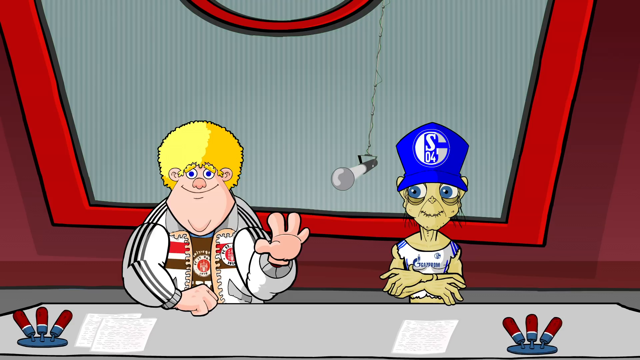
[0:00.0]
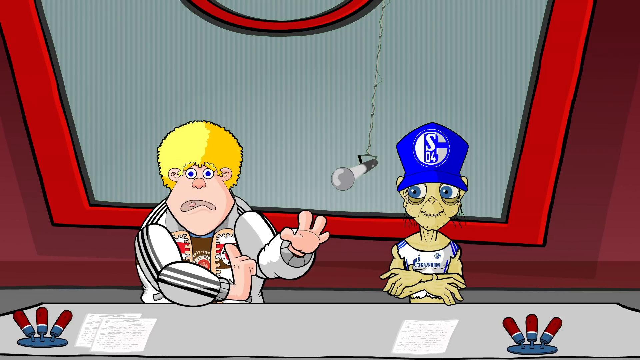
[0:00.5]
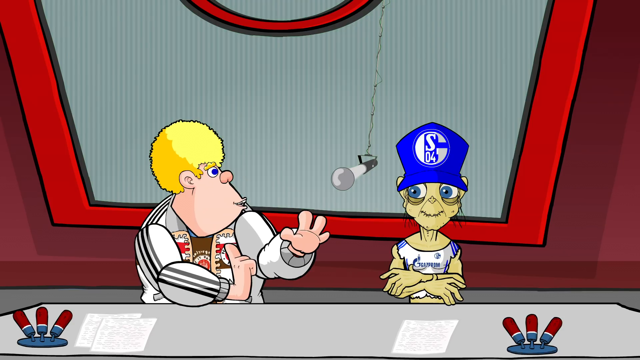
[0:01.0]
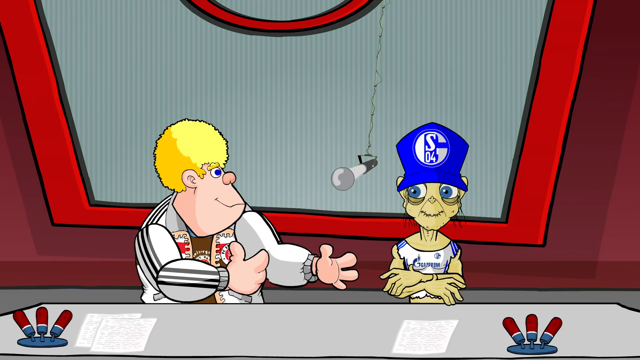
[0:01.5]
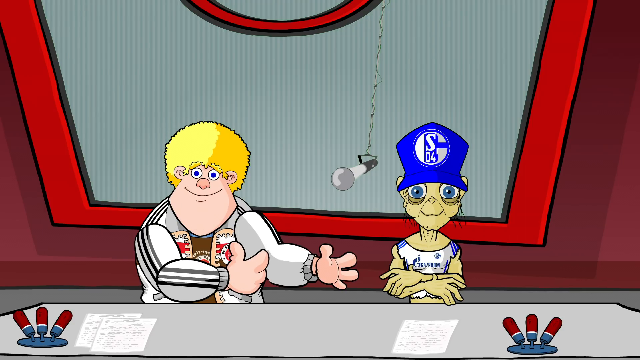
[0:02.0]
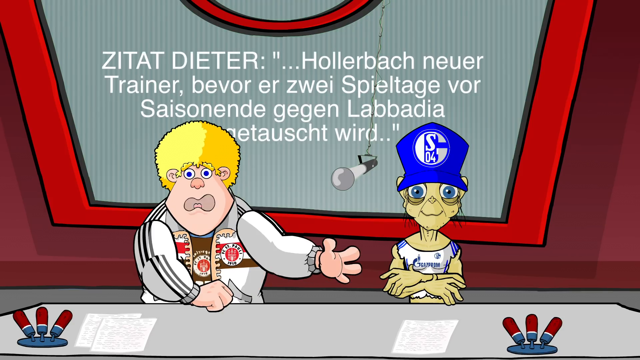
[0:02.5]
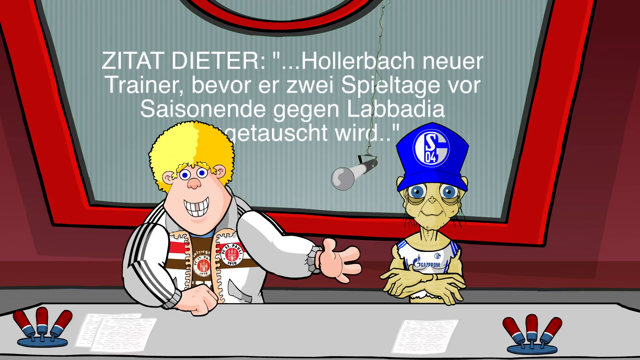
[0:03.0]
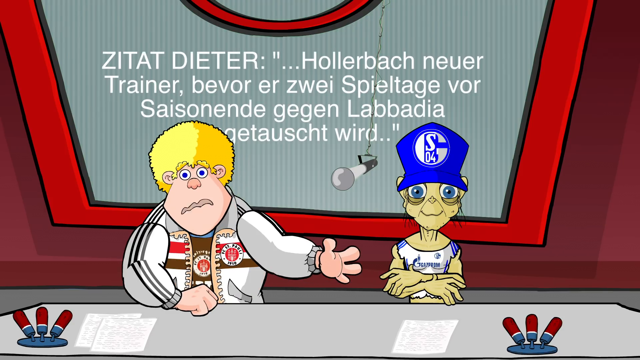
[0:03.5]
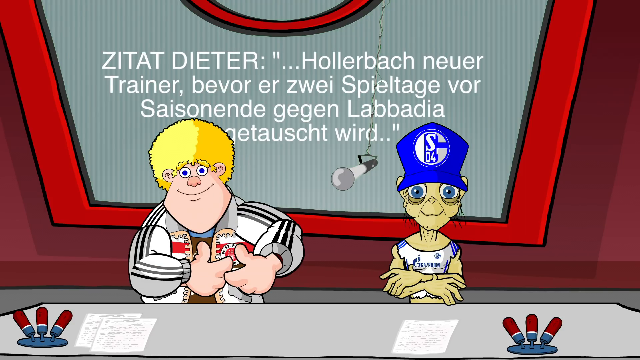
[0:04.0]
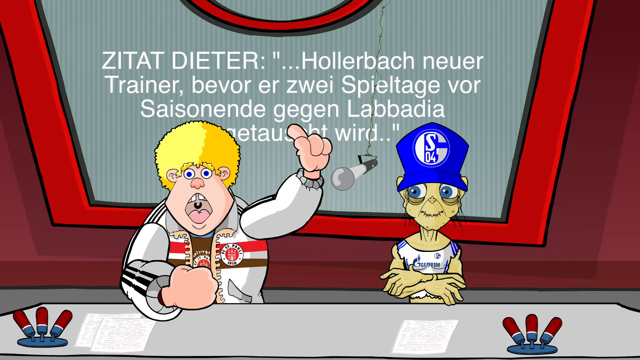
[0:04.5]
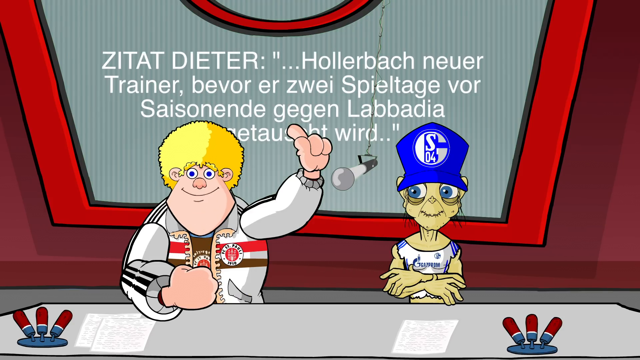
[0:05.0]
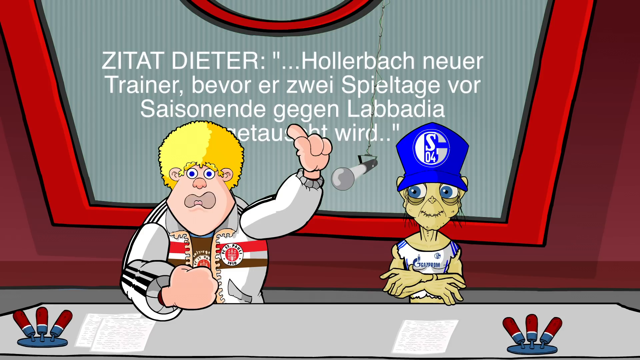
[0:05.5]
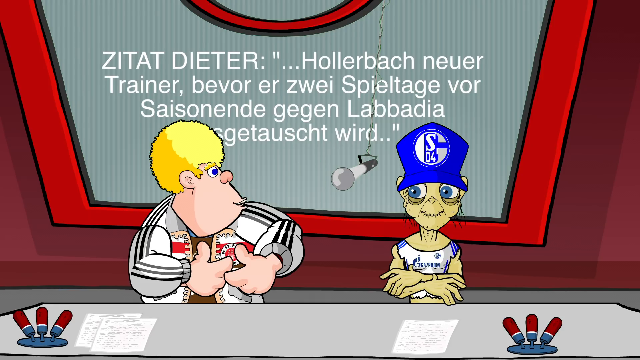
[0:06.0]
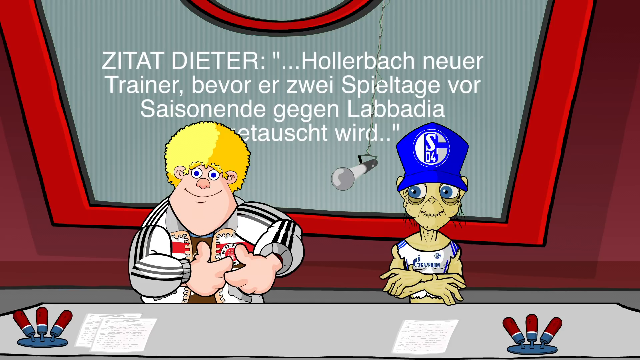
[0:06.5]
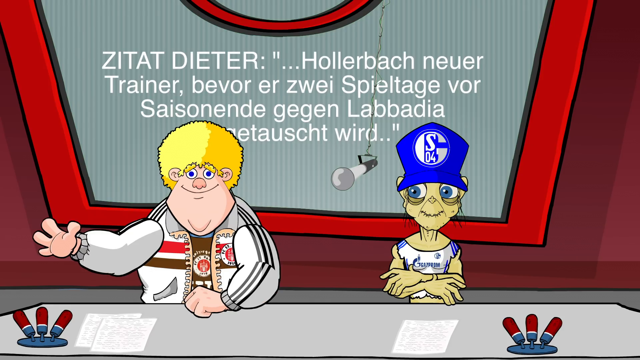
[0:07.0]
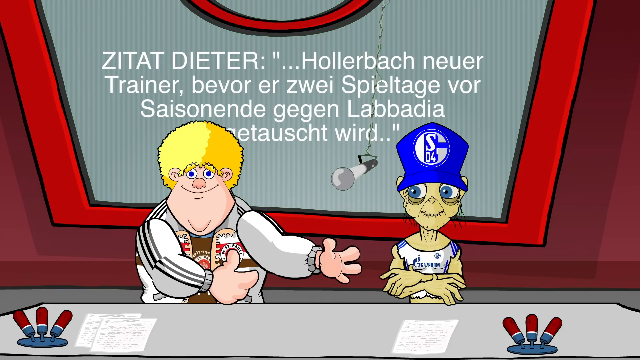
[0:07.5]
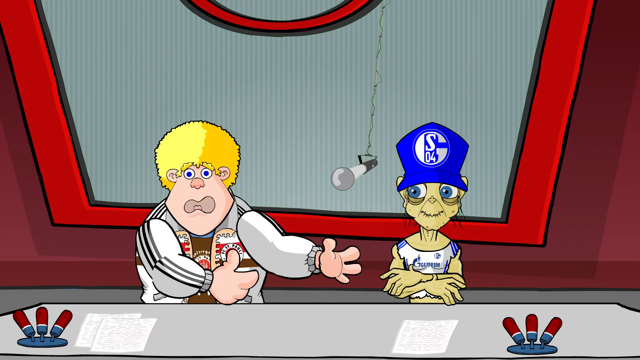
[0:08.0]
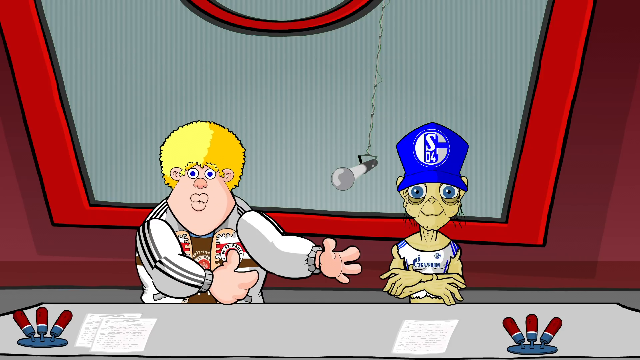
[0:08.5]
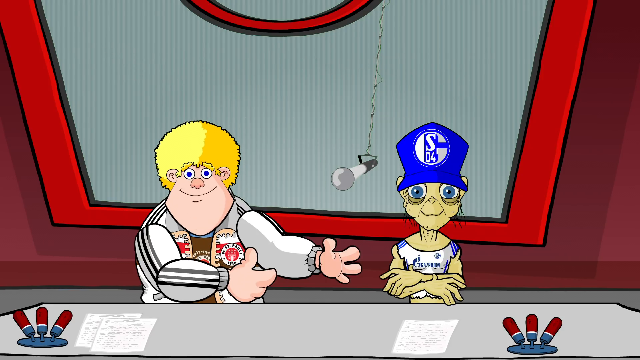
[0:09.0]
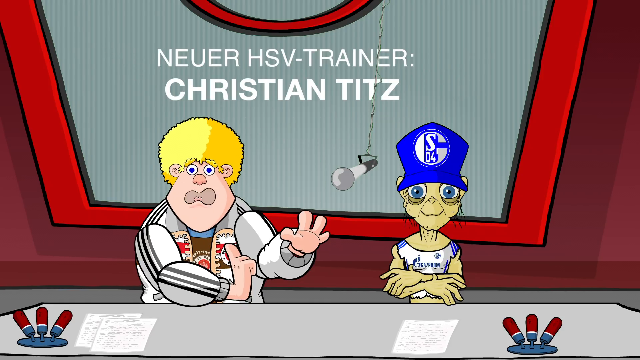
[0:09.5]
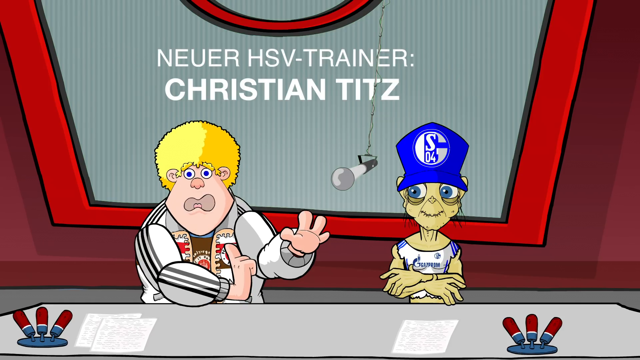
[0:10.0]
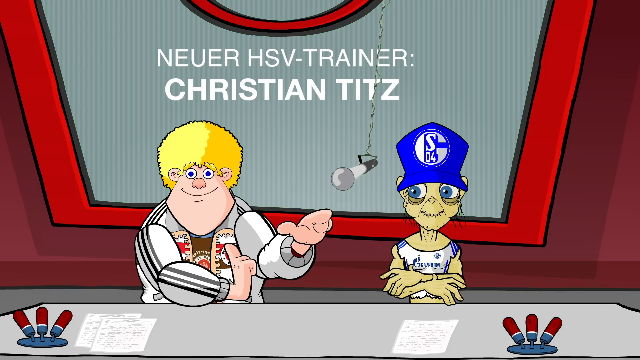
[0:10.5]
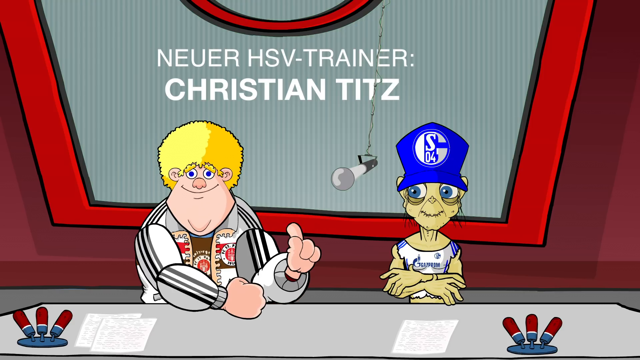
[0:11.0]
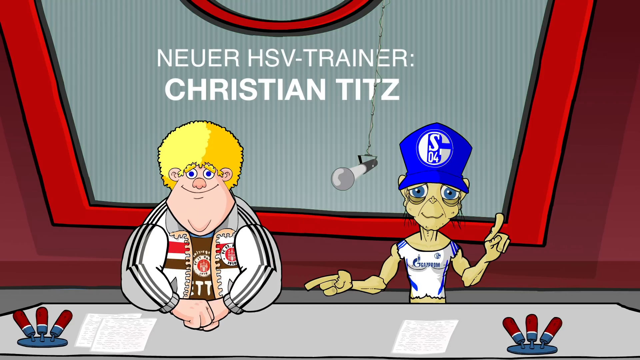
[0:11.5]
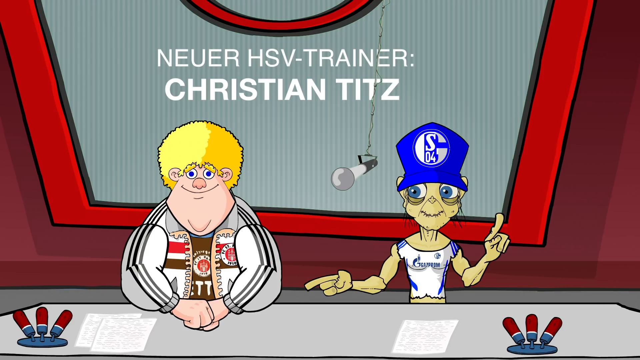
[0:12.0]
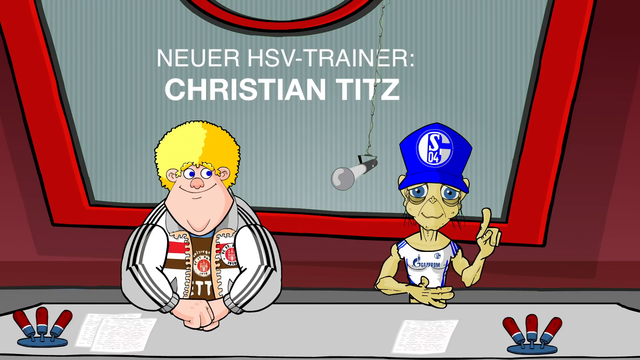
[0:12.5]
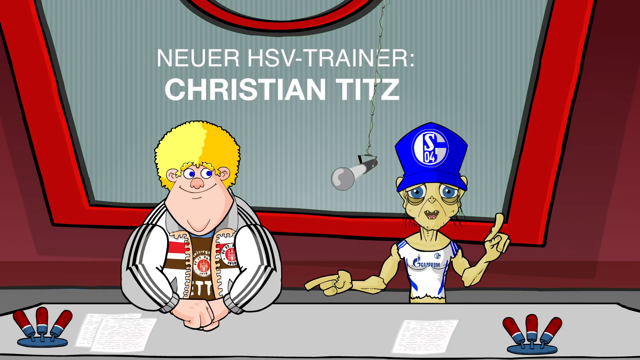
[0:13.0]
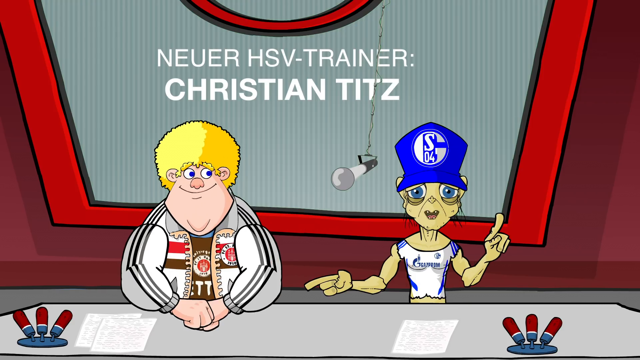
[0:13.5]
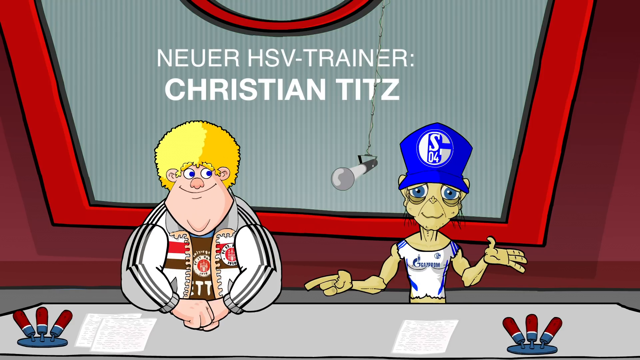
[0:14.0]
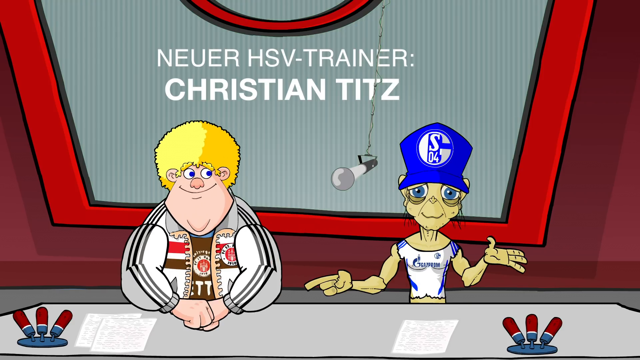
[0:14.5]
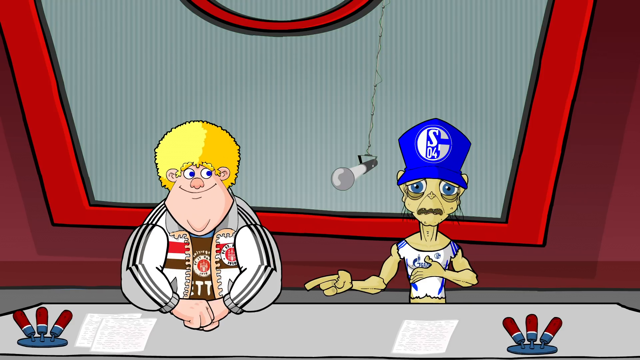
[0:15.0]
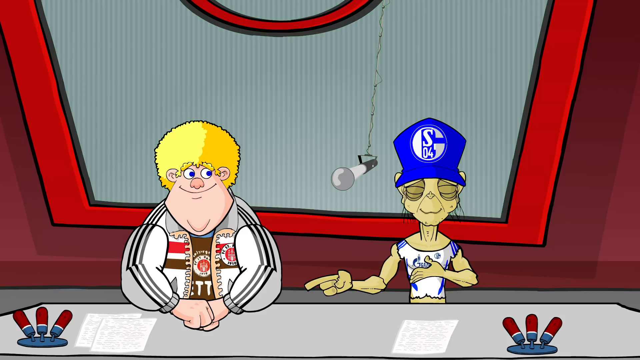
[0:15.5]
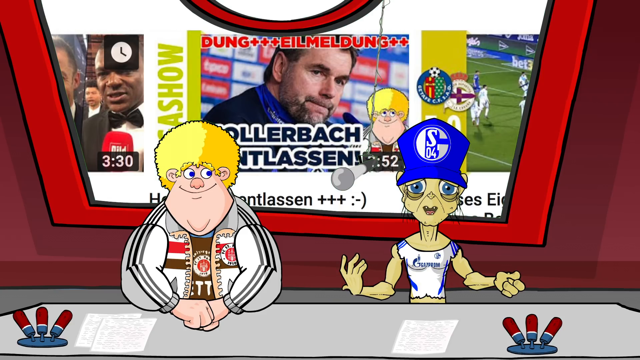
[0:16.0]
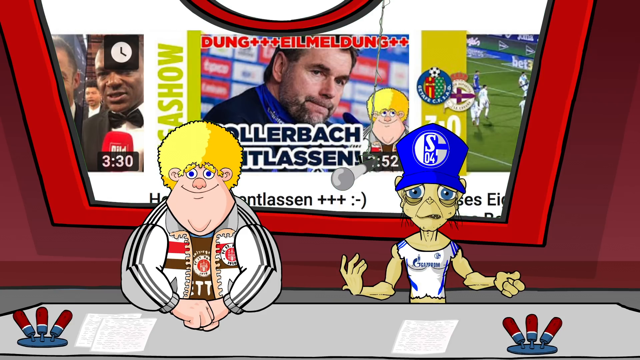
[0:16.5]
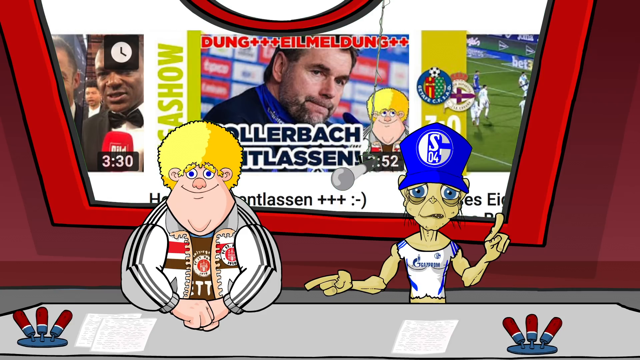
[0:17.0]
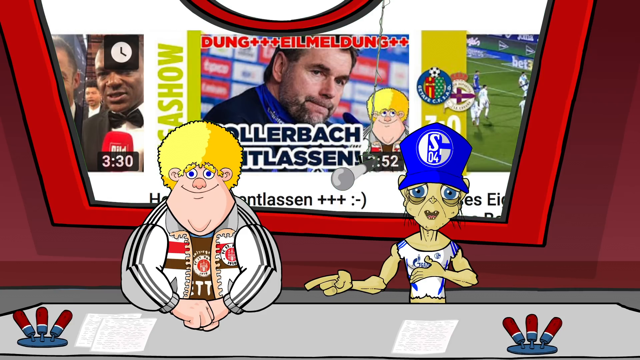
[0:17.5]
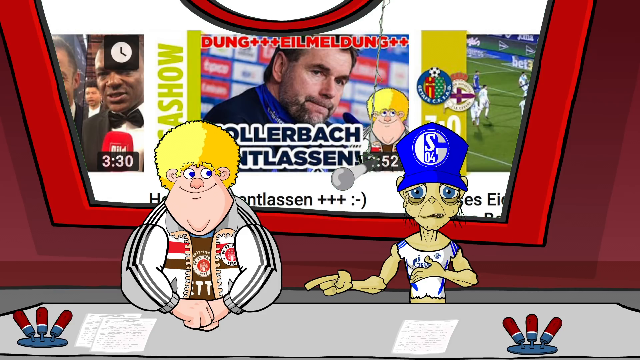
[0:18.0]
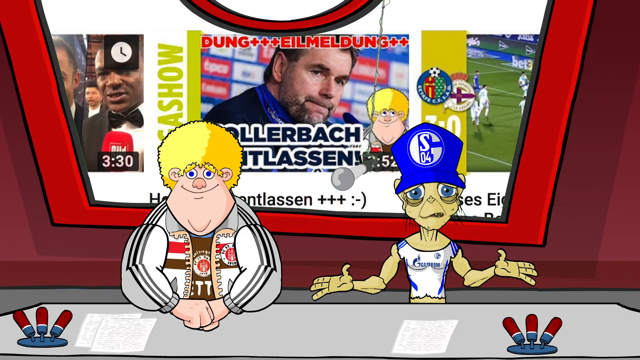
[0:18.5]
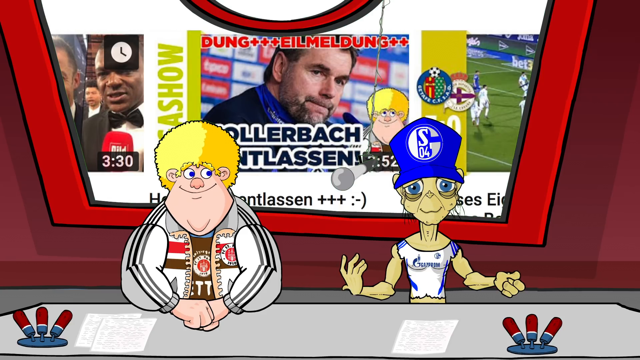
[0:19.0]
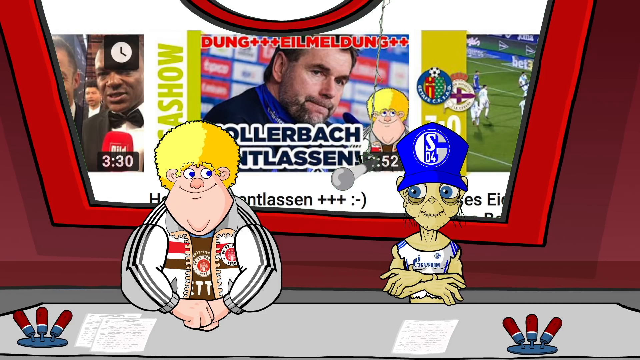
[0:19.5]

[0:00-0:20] A cartoon character with blonde hair and a large chin sits next to another alien-looking, gremlin-like character with a blue hat and a whitish blue shirt. Non-English text appears on the screen over a sort of reddish background, with a sort of gray vertical-line background in the middle of it. The two animated characters sit at a table in a sort of news-announcer format, and images of different people appear in the background behind them. These two are the only subjects visible, except for static images of real, non-animated people displayed behind them right at the end.